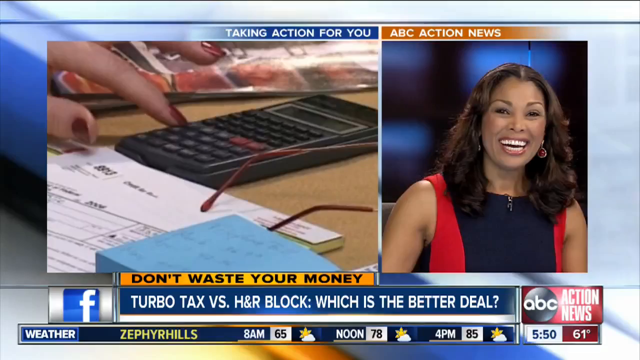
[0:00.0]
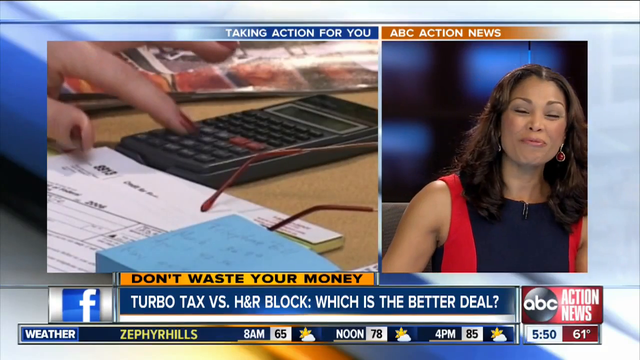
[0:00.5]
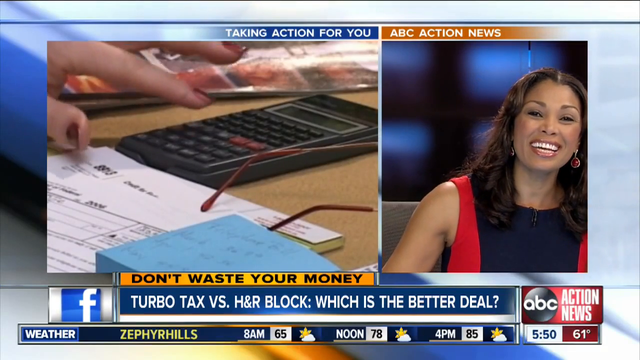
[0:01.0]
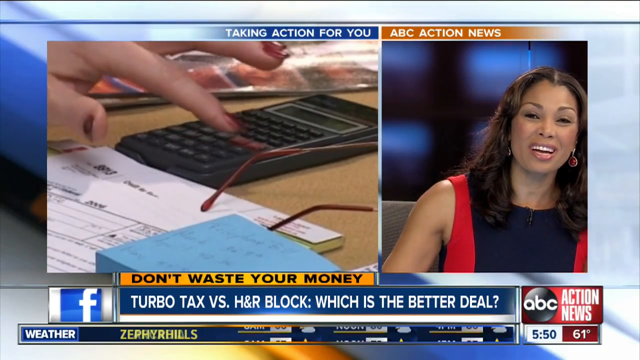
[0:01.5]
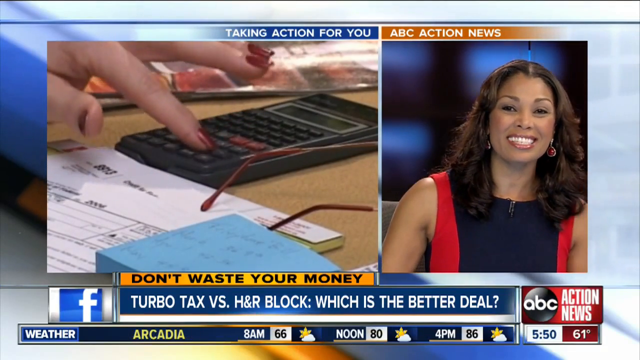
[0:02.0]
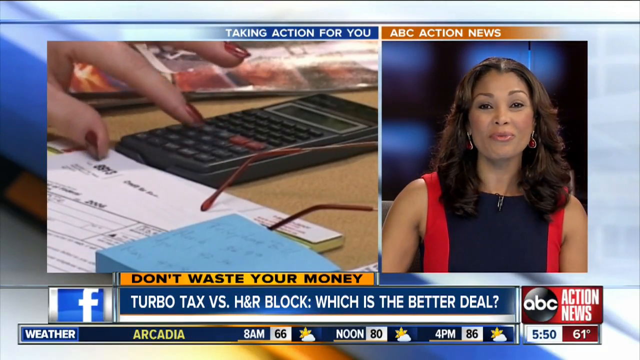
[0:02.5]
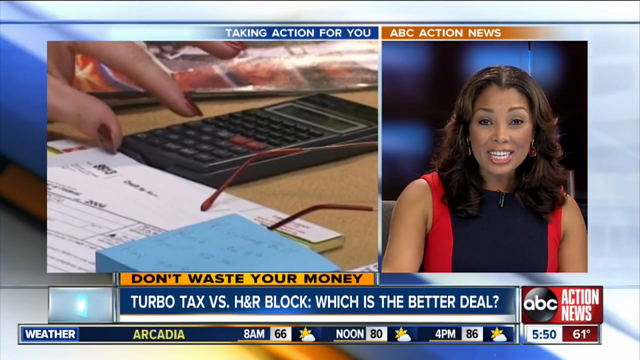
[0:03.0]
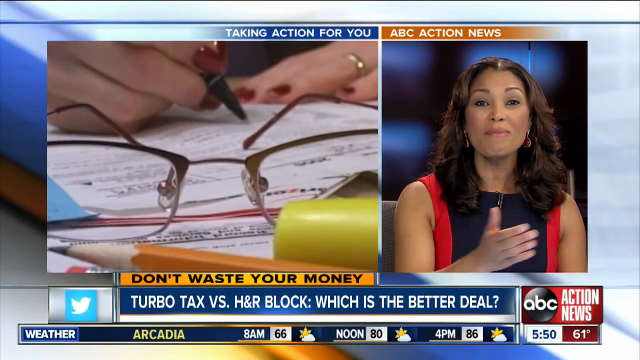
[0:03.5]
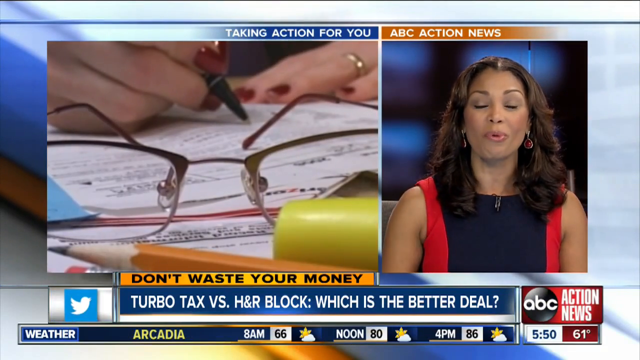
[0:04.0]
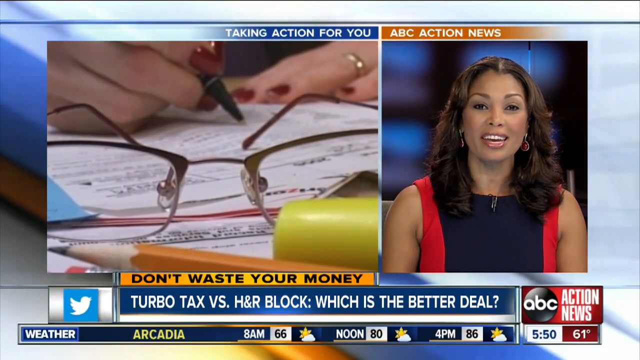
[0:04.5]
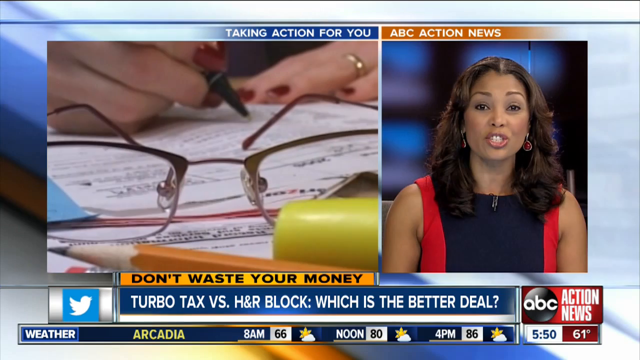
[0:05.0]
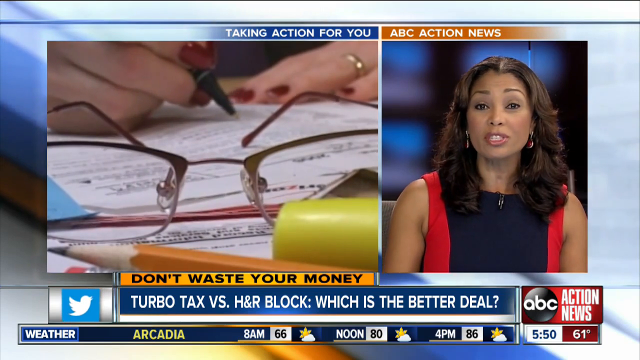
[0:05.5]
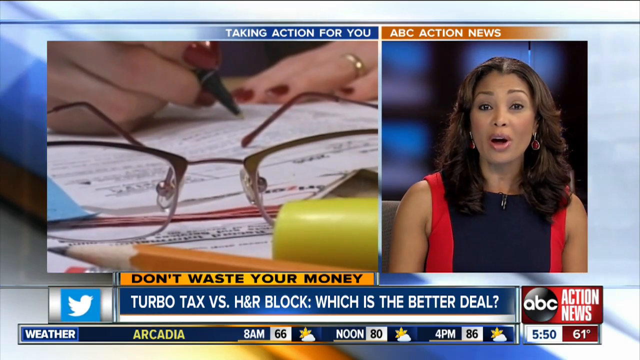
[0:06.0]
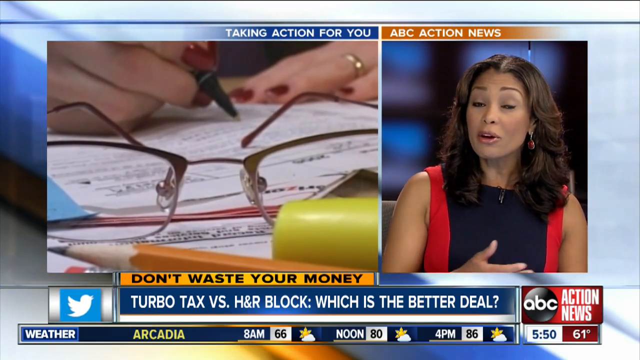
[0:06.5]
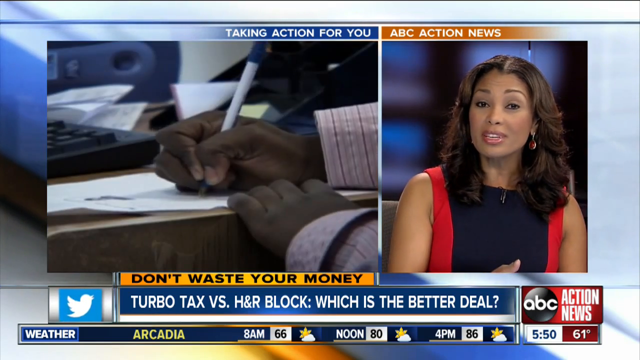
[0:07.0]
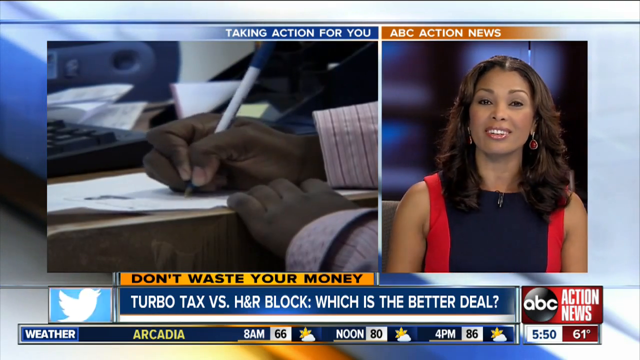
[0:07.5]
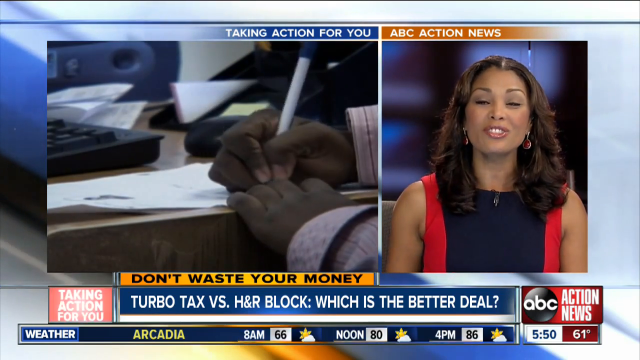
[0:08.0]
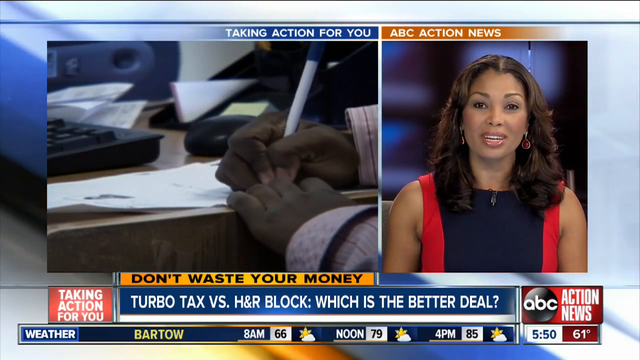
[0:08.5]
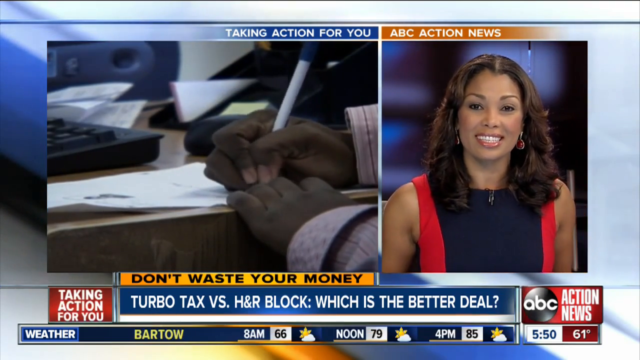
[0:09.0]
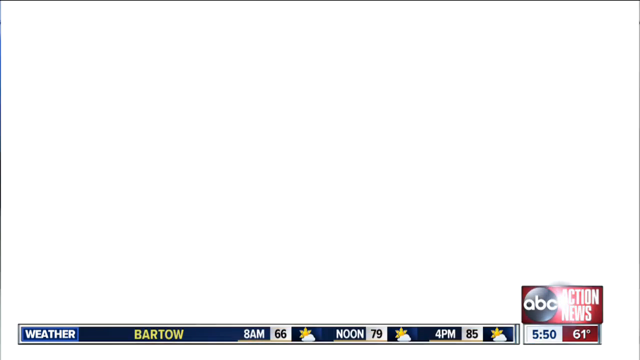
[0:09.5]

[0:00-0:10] A news segment shows two shots at once. One is of a female news anchor from ABC 7 Action News, an African-American woman. The other shows some tax forms and a female hand typing into a calculator. Text along the bottom reads "don't waste your money. TurboTax versus H&R Block. What is the better deal?" The anchor appears to be laughing. The woman with the tax documents writes on them. The shot then switches to more tax documents, this time with a person who is maybe African-American or Indian holding a pen and filling out documents.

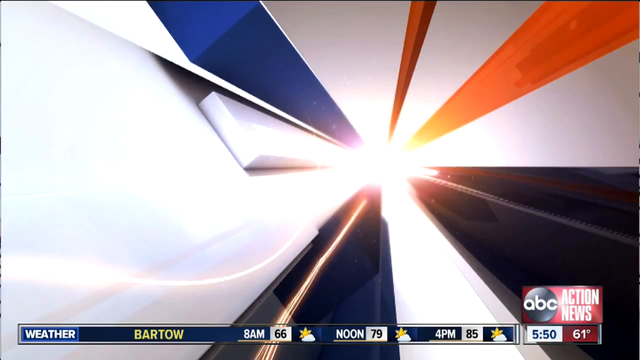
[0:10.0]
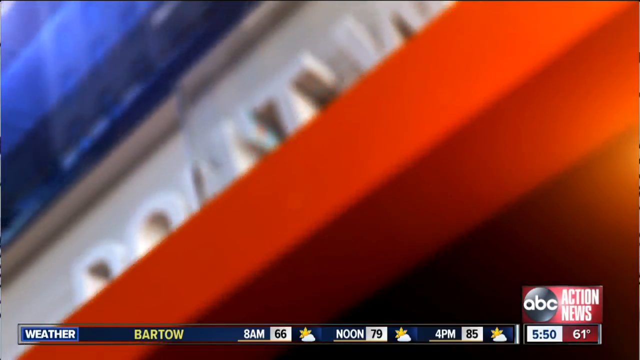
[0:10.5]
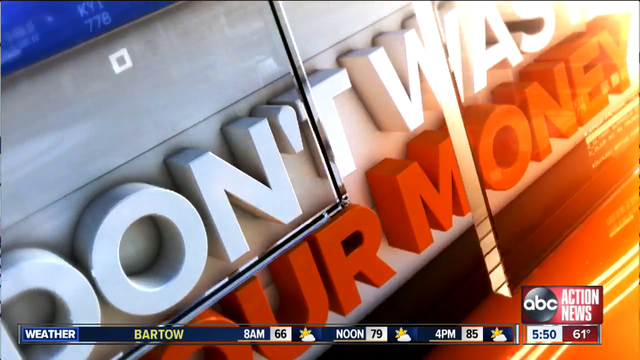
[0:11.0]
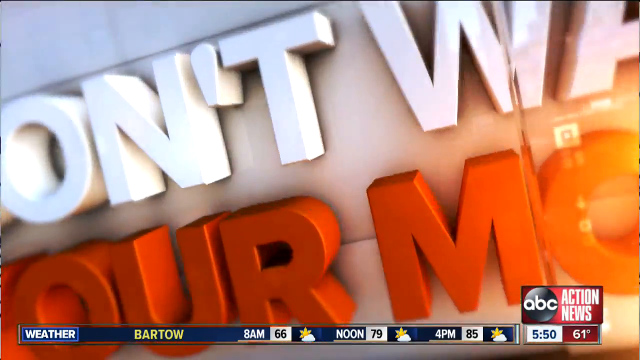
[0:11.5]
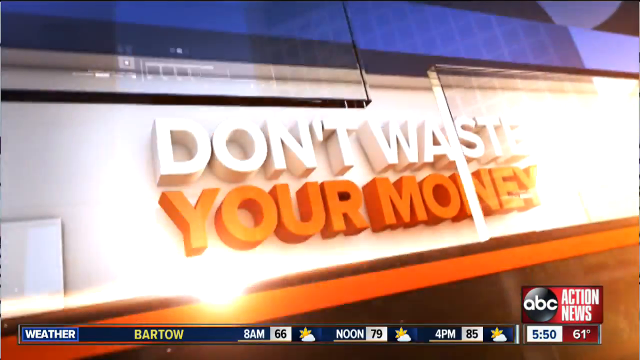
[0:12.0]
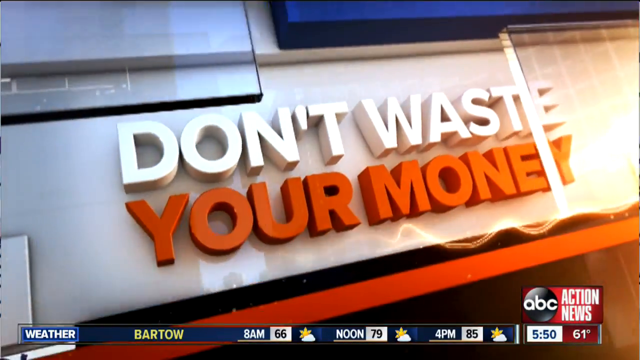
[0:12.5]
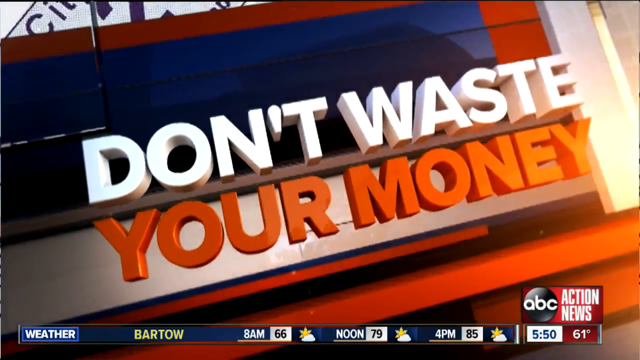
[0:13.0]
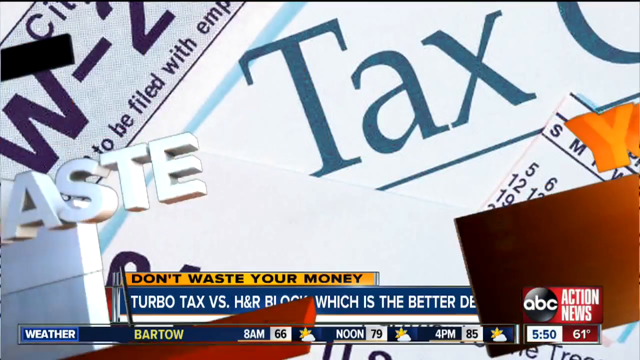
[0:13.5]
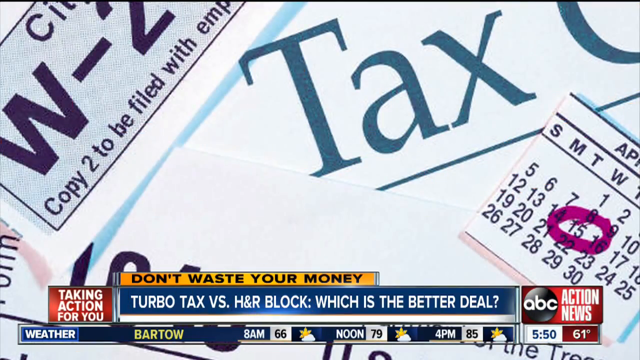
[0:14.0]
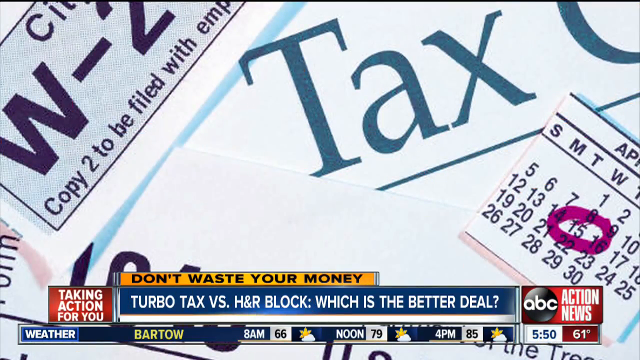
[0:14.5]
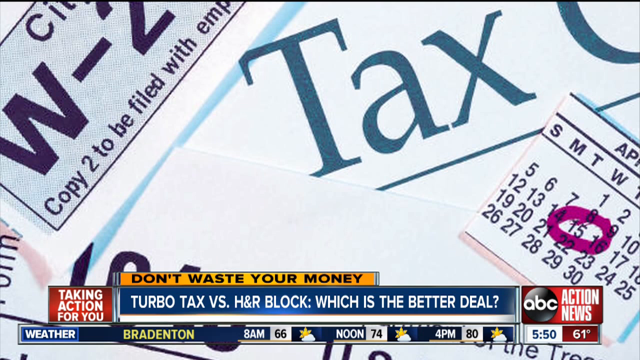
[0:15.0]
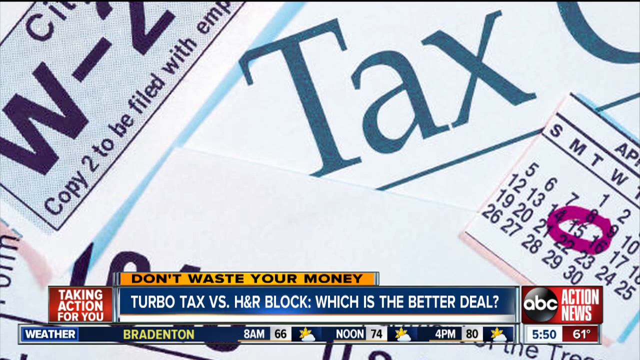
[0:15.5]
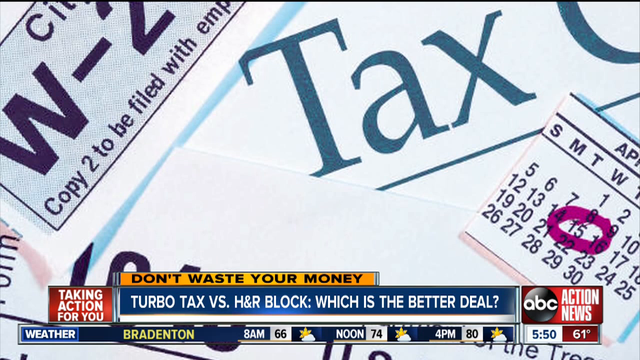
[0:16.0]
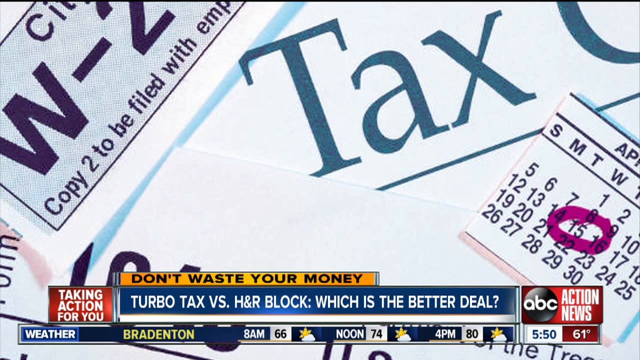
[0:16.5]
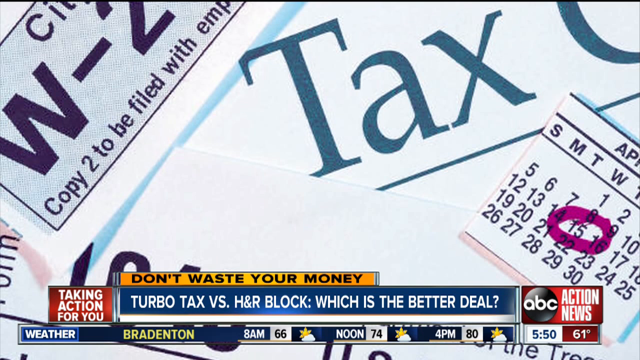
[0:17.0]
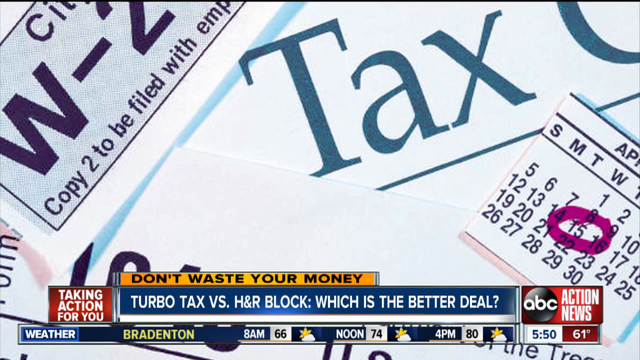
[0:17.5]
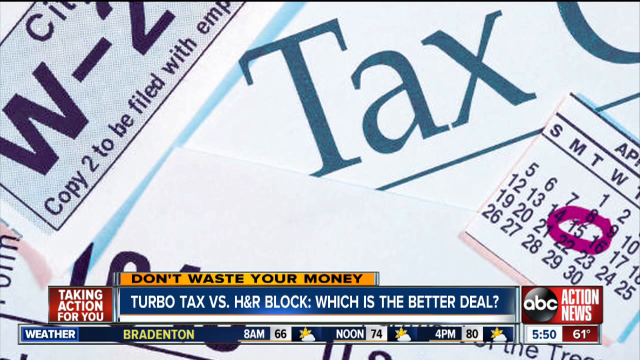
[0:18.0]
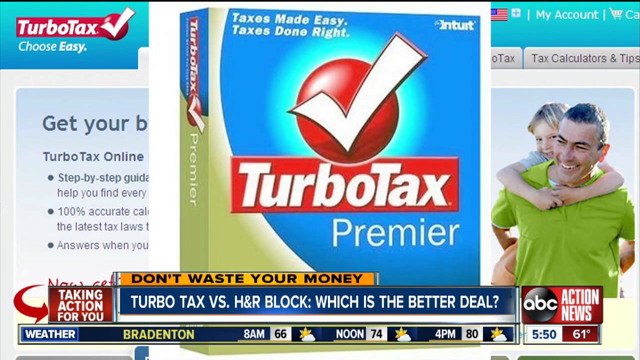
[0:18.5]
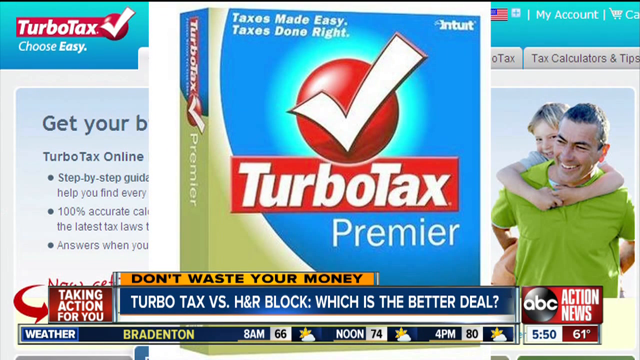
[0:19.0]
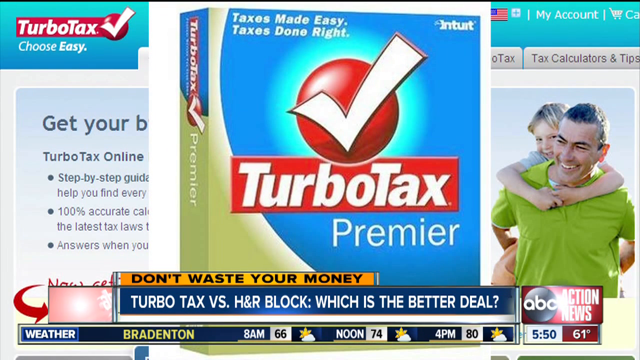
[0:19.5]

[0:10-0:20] A transition takes the segment from one story to the next, with text reading "don't waste your money." In the background are a W2 tax form and a calendar with April 15th circled. The bottom text still reads "don't waste your money TurboTax versus H&R Block, which is the better deal," from ABC Action News. A box pops up for TurboTax, with the TurboTax website in the background. The box is TurboTax Premier and says "taxes made easy, taxes done right."